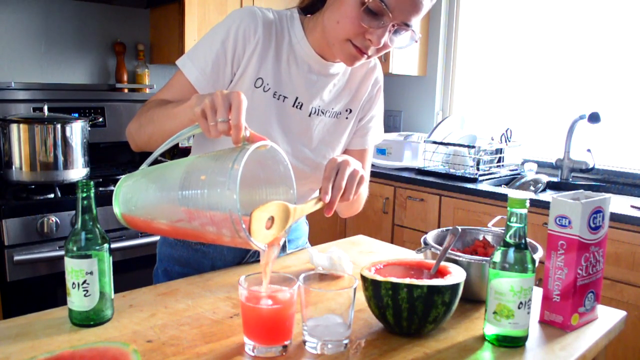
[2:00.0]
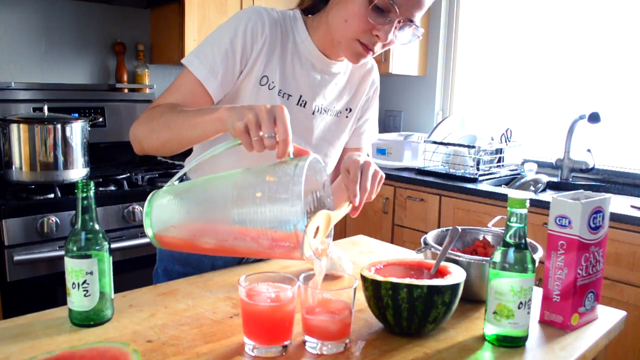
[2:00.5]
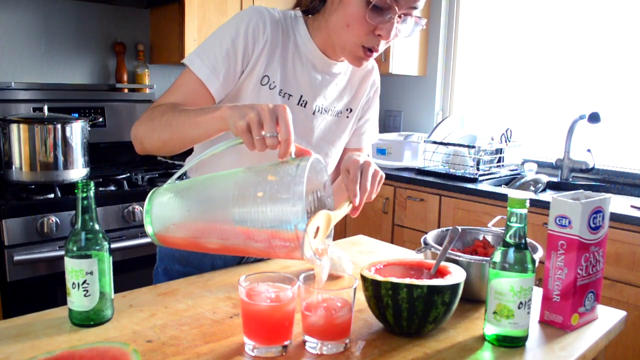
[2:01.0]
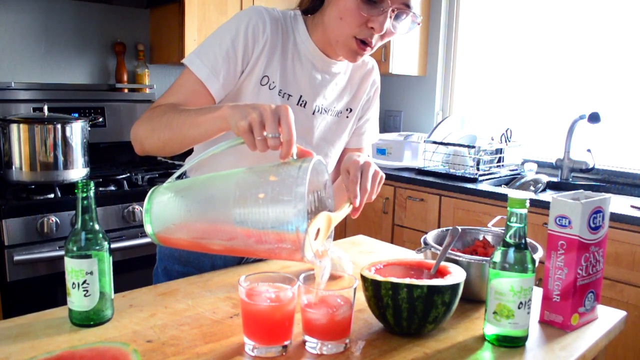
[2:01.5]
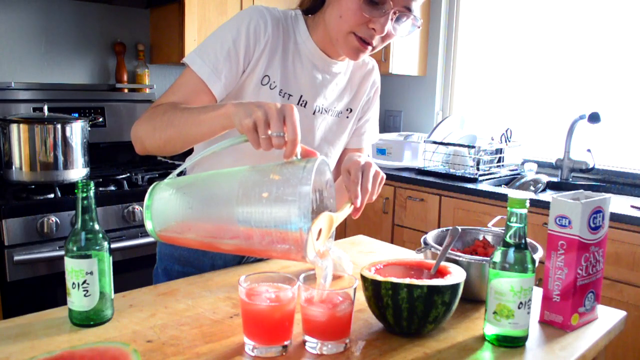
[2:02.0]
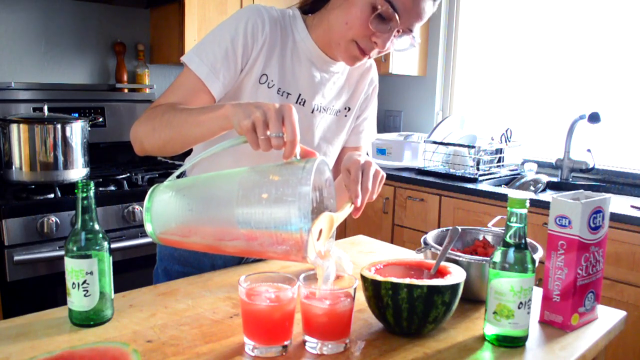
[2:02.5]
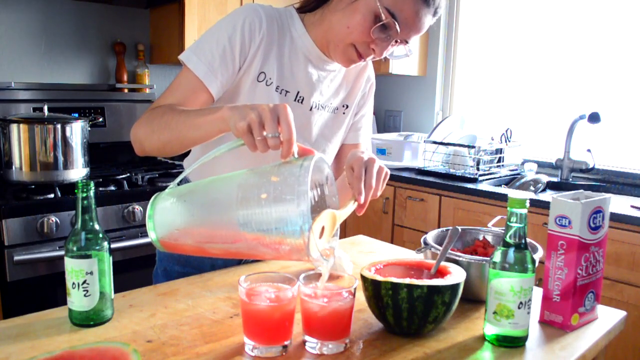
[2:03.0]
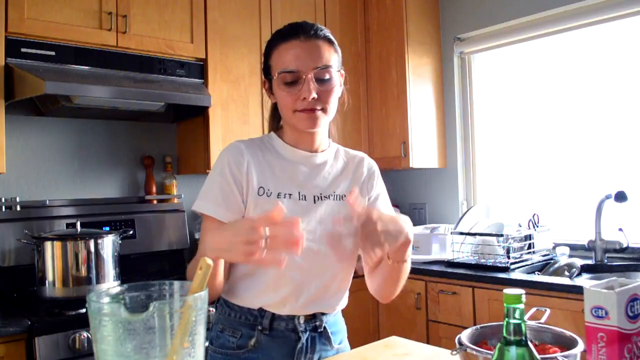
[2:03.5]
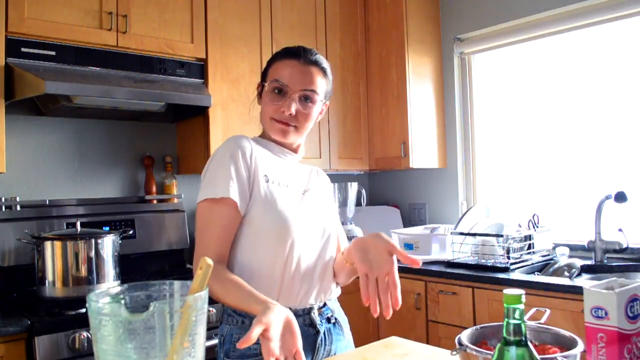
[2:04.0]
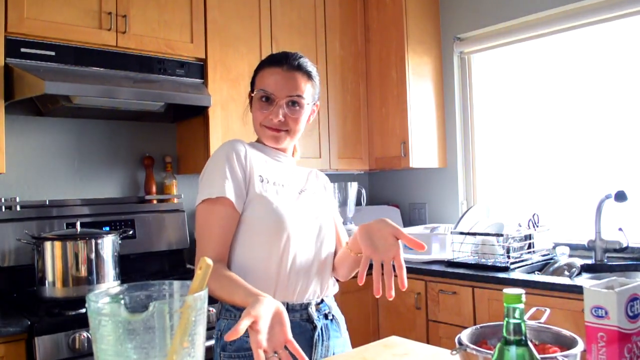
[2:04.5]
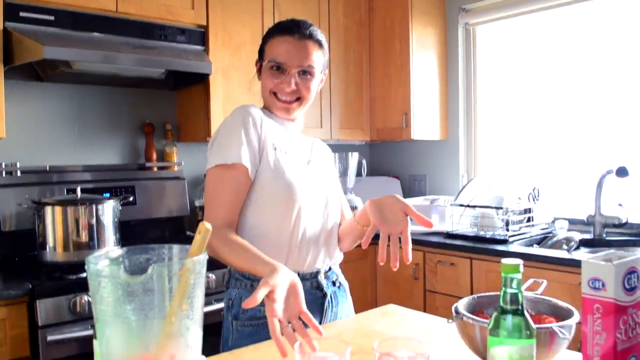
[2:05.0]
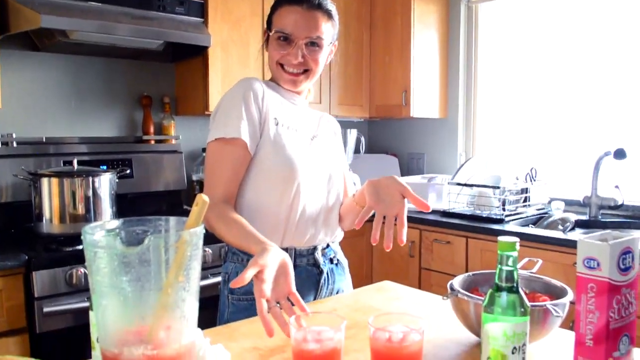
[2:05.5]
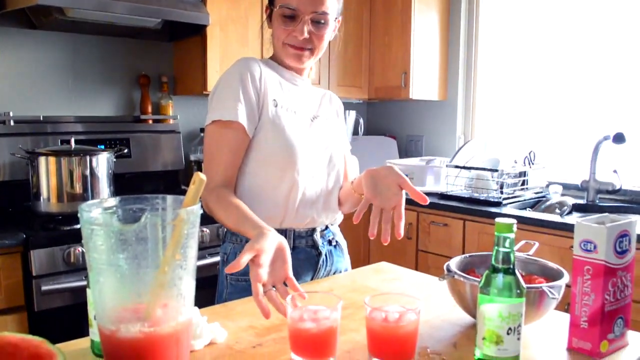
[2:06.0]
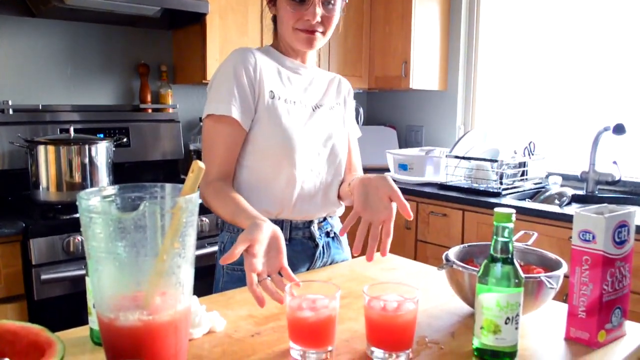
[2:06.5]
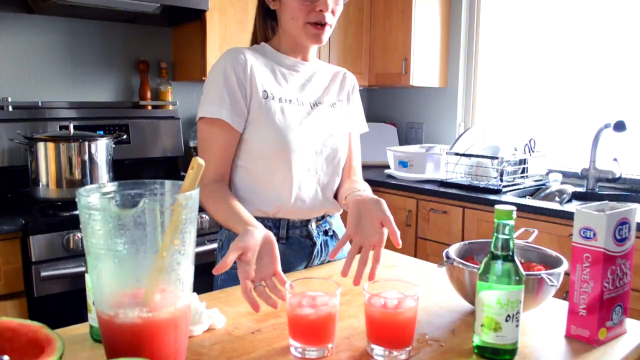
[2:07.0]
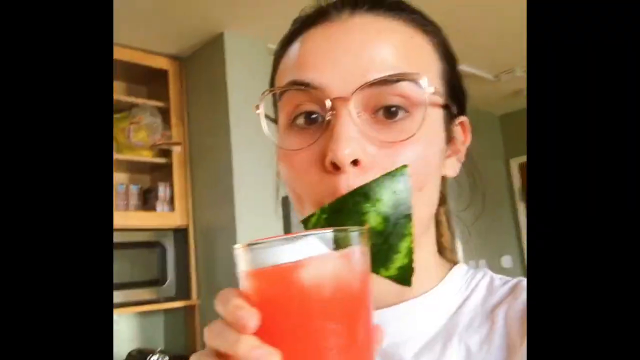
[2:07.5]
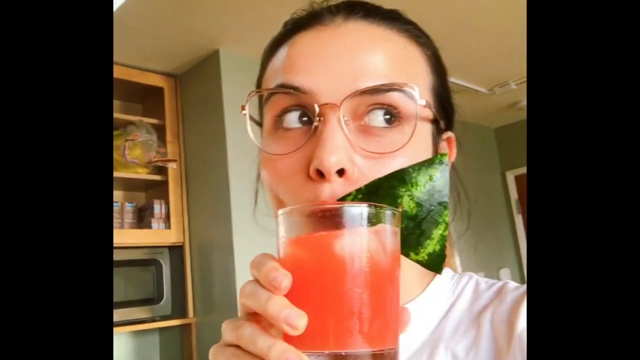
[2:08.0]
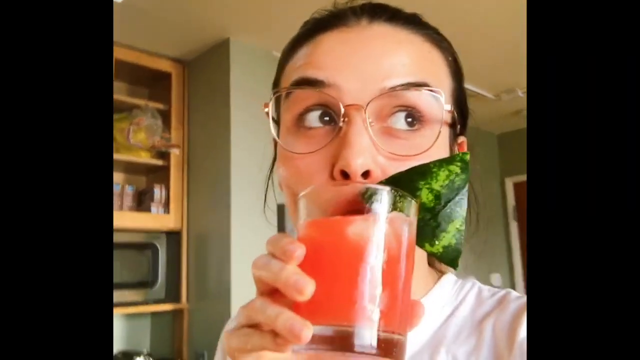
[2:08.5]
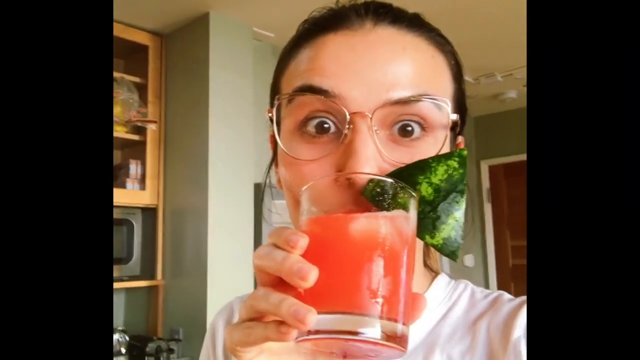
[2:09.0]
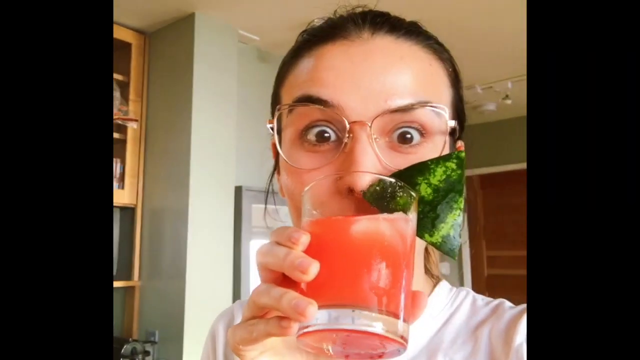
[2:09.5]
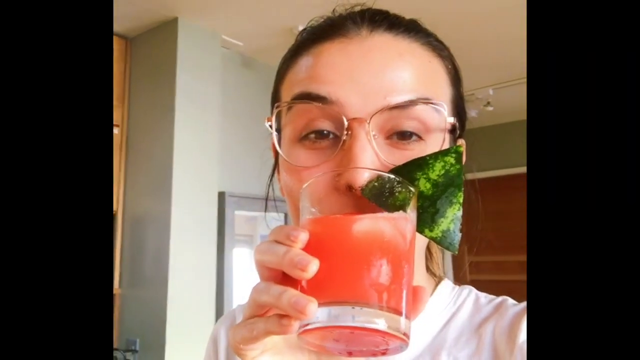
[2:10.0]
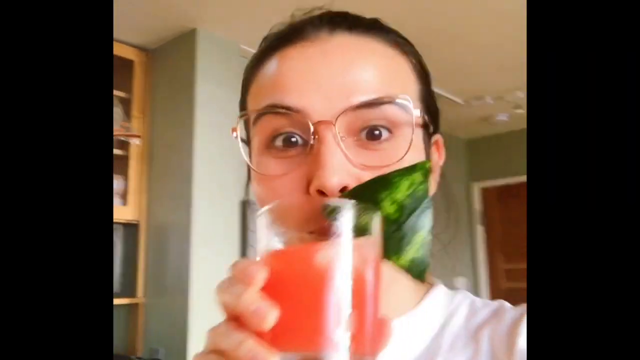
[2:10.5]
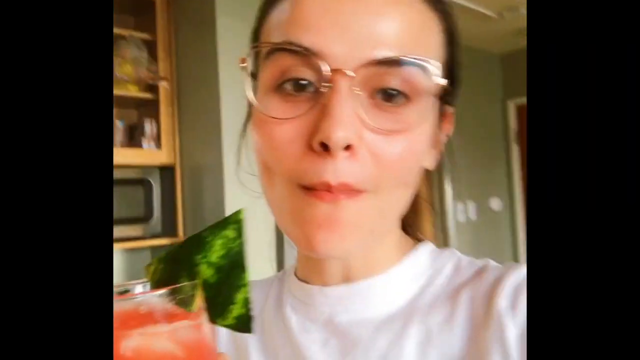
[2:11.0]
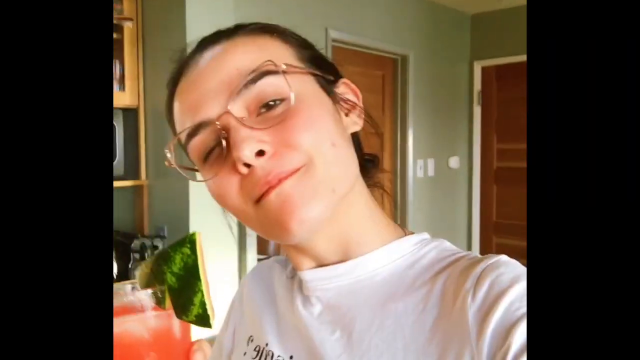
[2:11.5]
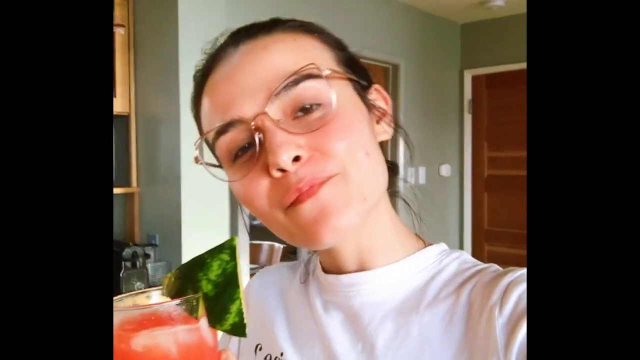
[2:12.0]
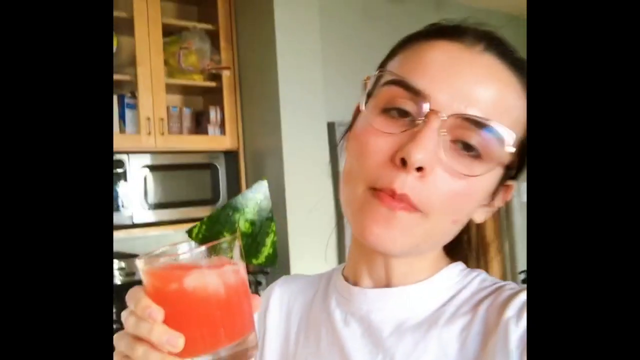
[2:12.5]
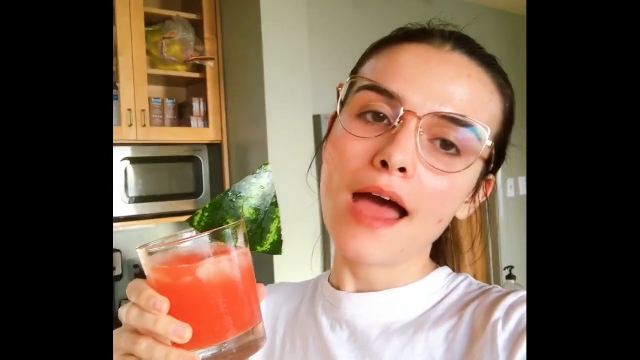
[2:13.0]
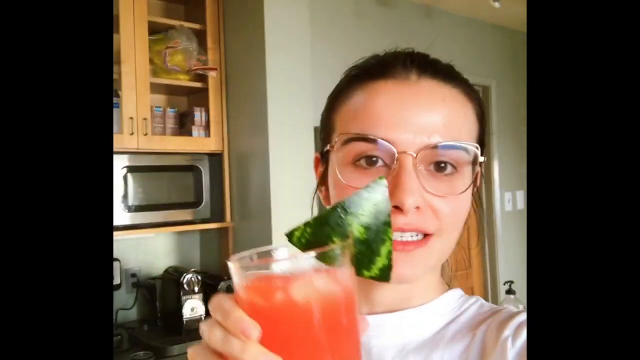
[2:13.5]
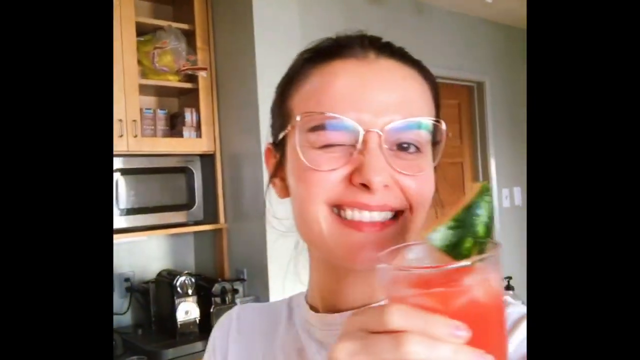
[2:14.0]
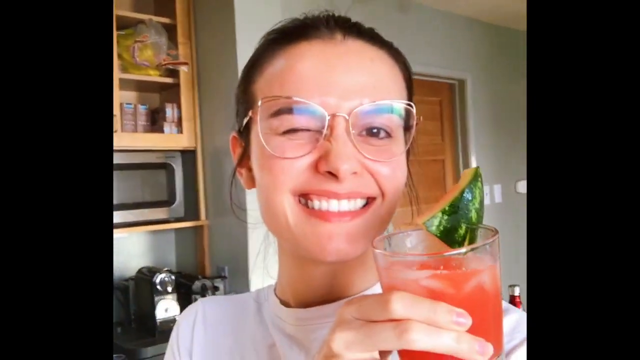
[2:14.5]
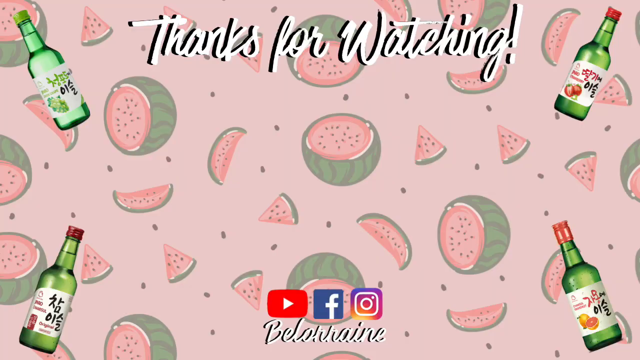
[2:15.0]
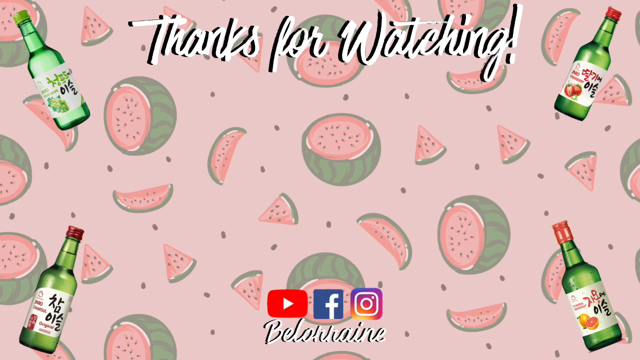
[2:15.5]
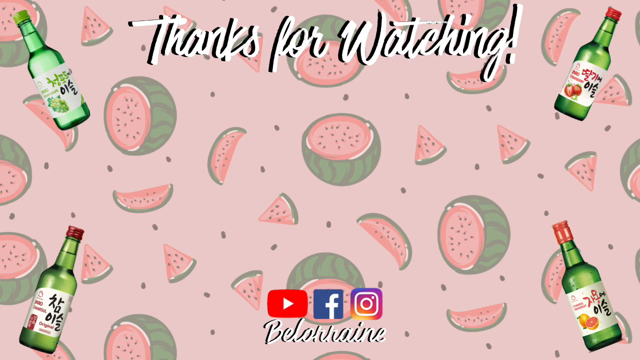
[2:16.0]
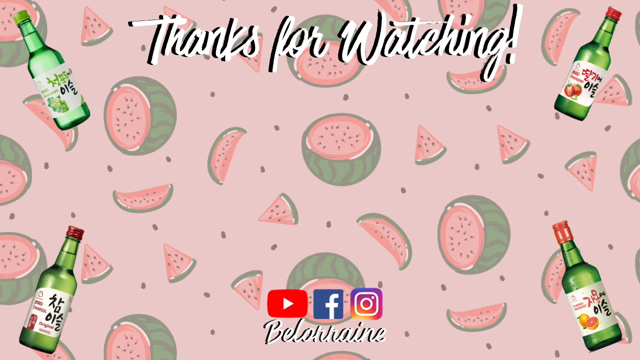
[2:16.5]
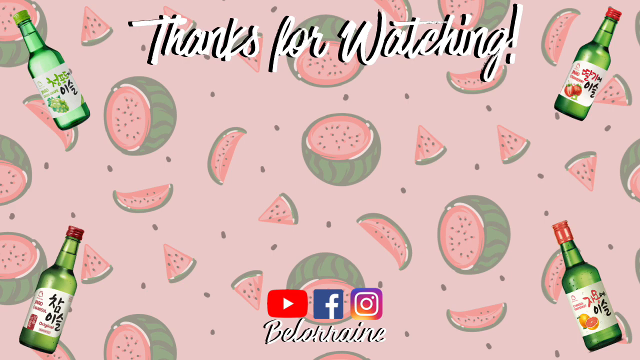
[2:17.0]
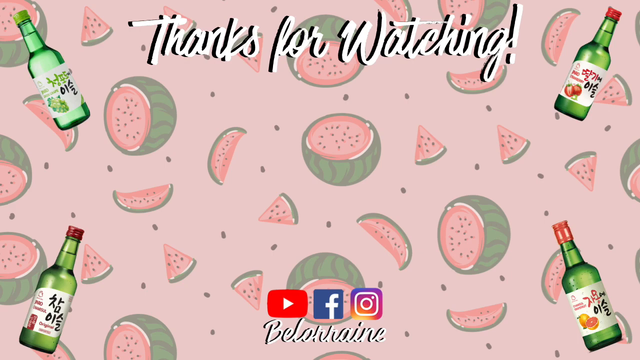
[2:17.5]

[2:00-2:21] A woman in the kitchen wearing a white T-shirt pours a watermelon alcoholic mixture from a pitcher into two clear glasses filled with ice, using a spoon so the ice in the pitcher does not fall into the glasses. She keeps pouring until the glasses are filled, then shows off the finished drinks, holding her hands in front of them as if to say "ta-da." The scene shifts to her holding up a glass of the watermelon beverage with a wedge of watermelon rind, sliced partway, placed on the glass as a garnish. She takes a sip, winks at the camera and smiles, and appears to say "cheers"; she seems bubbly and happy. The final screen has a pink background covered with pictures of watermelon slices and watermelon halves and reads "thanks for watching." There are four bottles of some sort of Korean beverages, one in each corner of the screen, and logos for YouTube, Facebook and Instagram at the bottom.